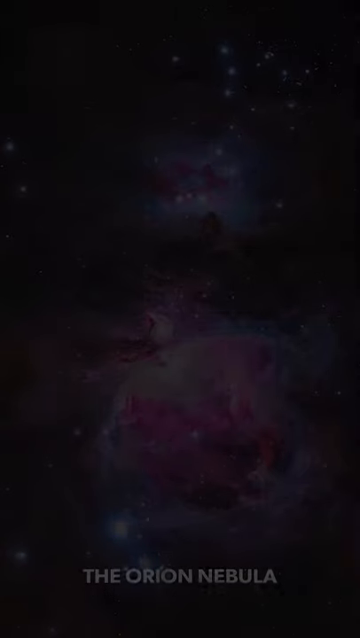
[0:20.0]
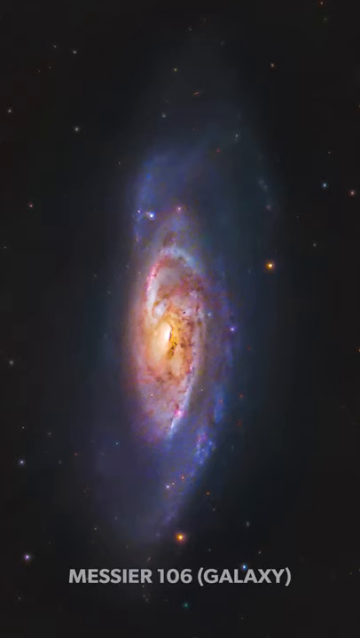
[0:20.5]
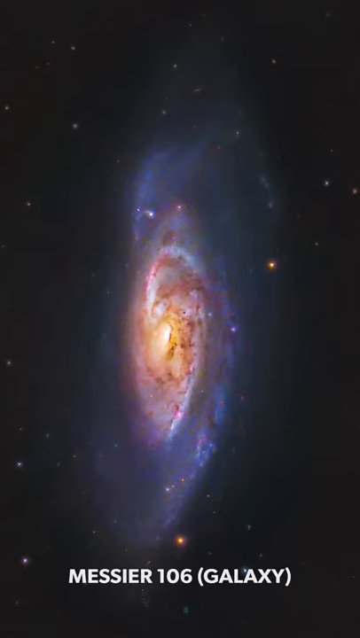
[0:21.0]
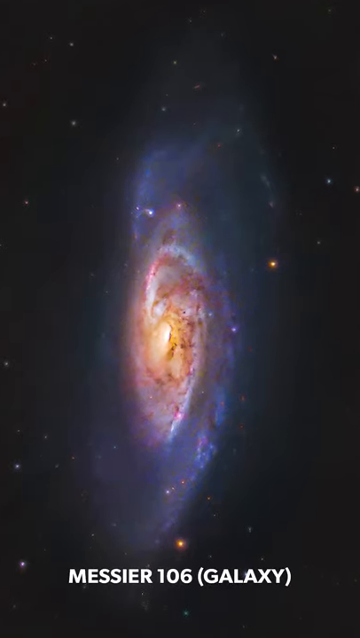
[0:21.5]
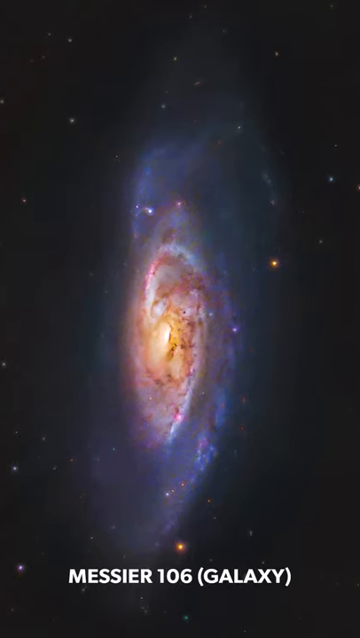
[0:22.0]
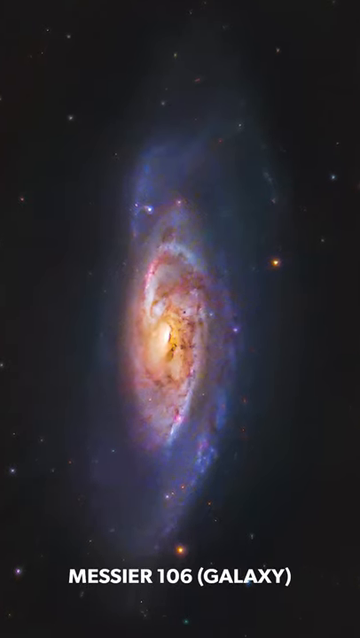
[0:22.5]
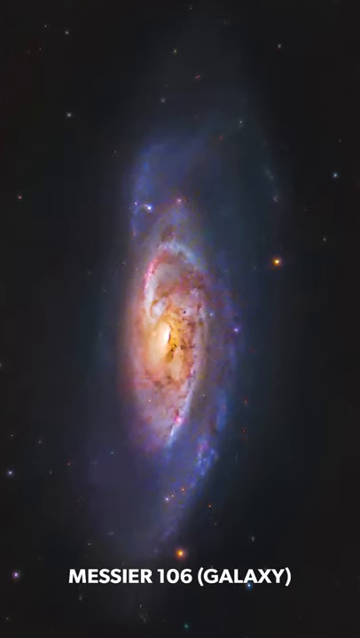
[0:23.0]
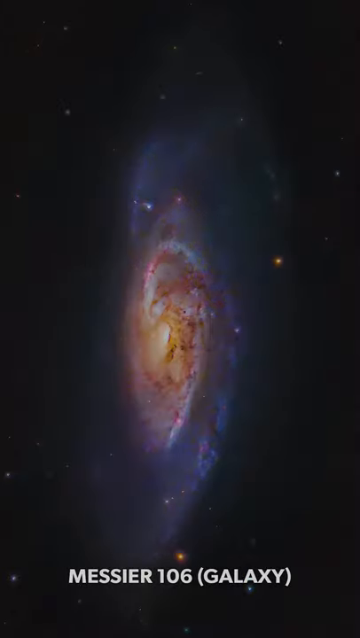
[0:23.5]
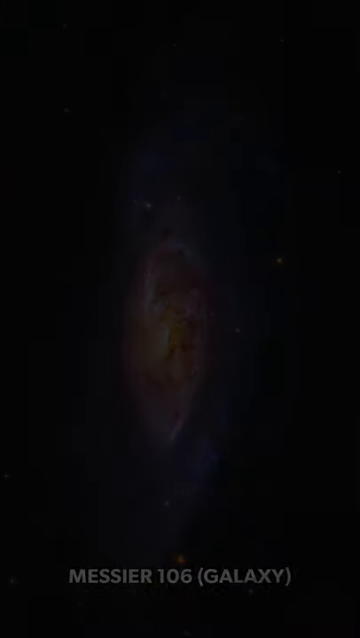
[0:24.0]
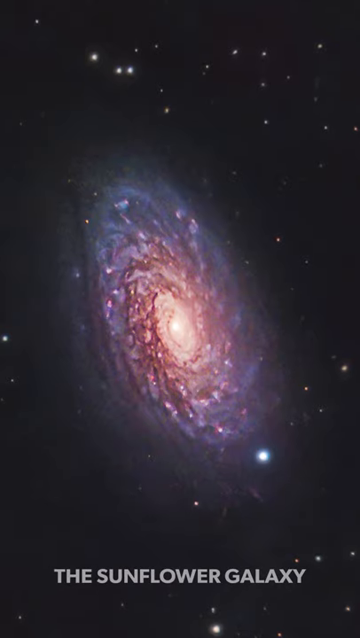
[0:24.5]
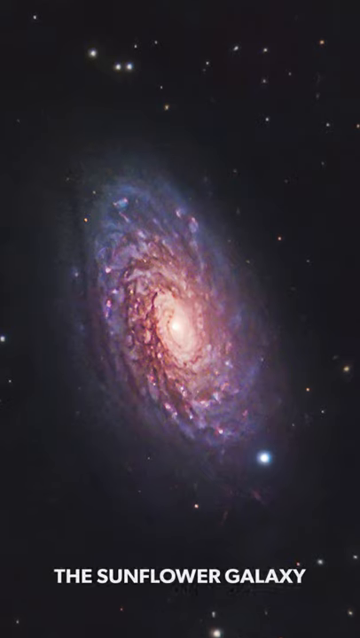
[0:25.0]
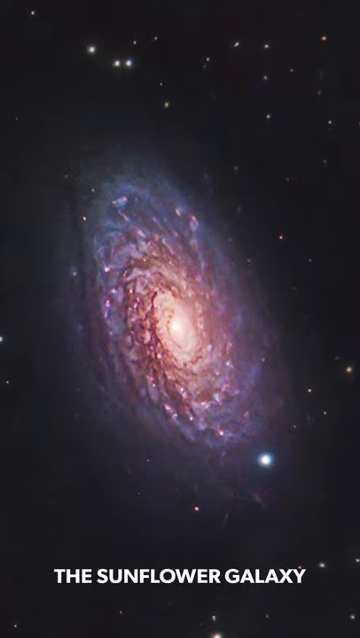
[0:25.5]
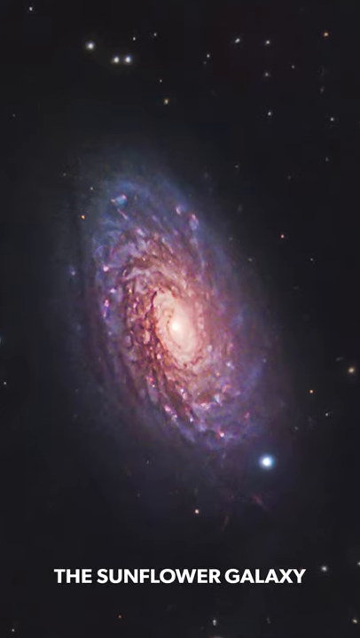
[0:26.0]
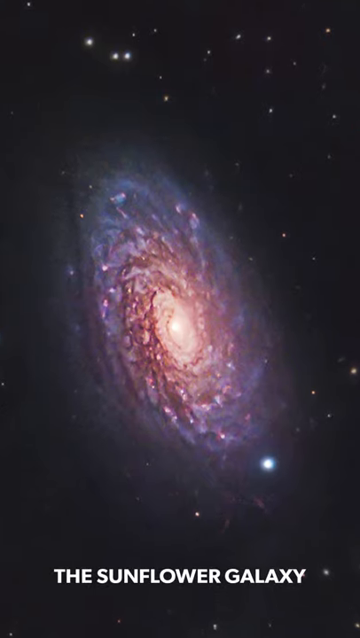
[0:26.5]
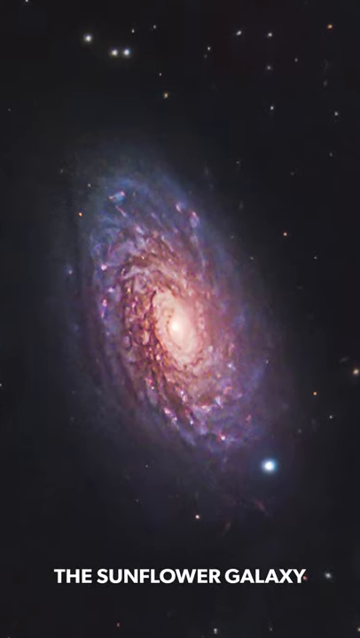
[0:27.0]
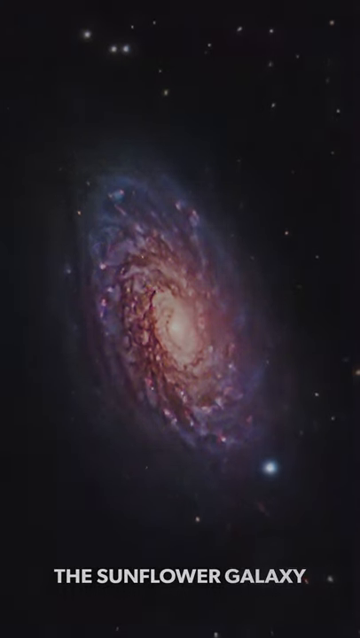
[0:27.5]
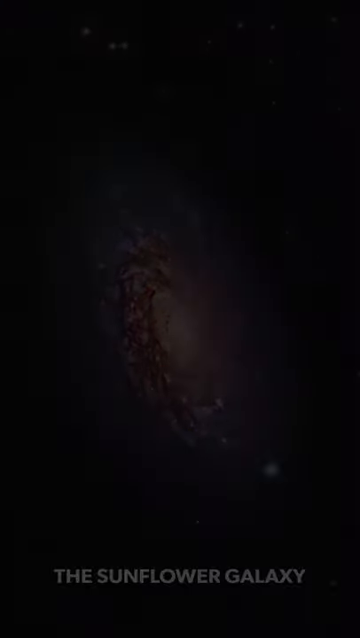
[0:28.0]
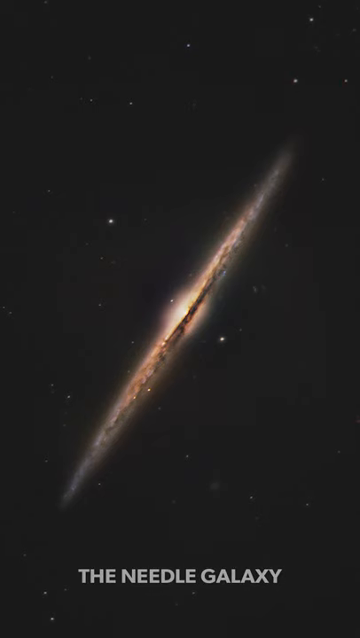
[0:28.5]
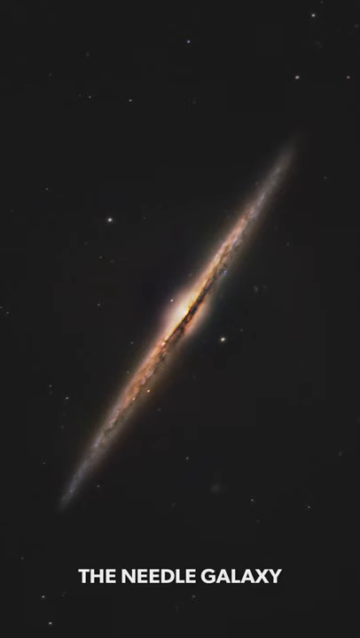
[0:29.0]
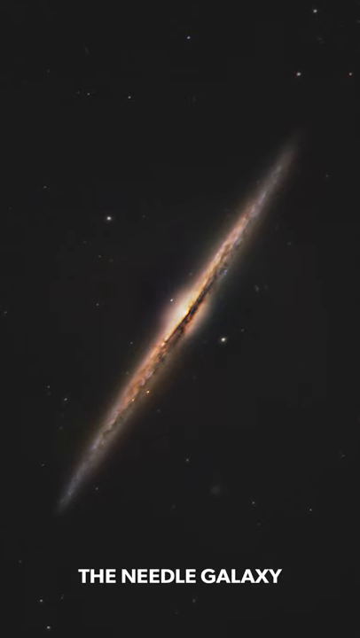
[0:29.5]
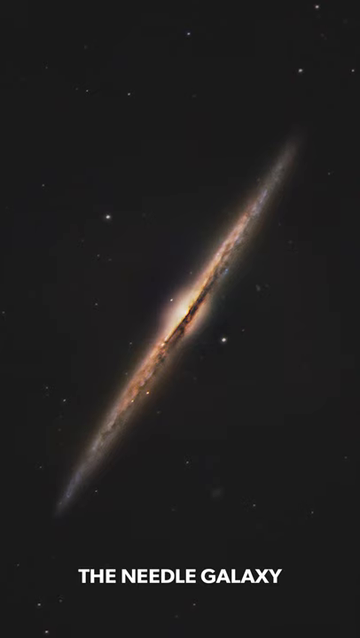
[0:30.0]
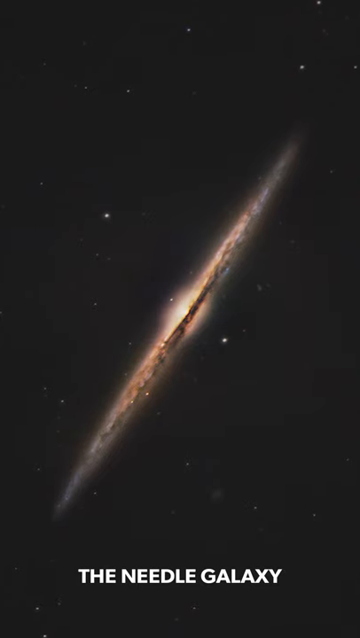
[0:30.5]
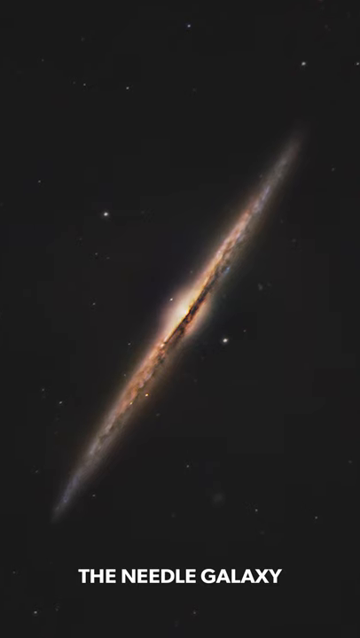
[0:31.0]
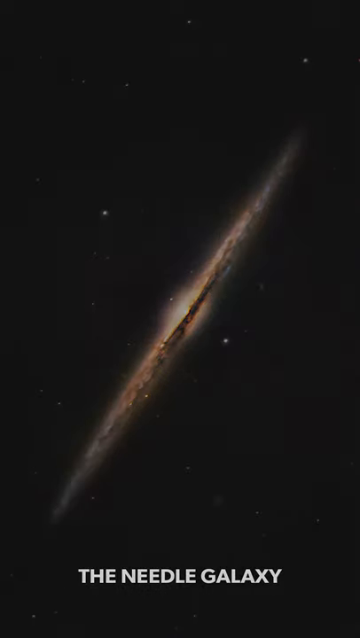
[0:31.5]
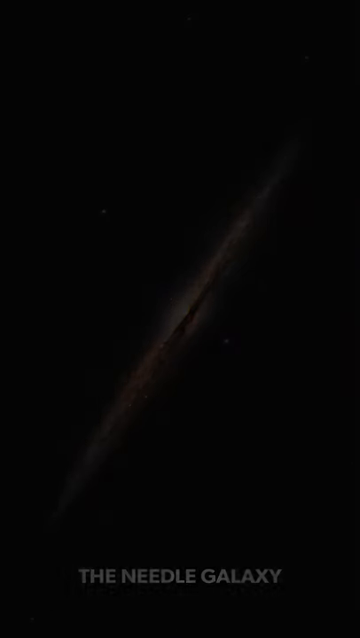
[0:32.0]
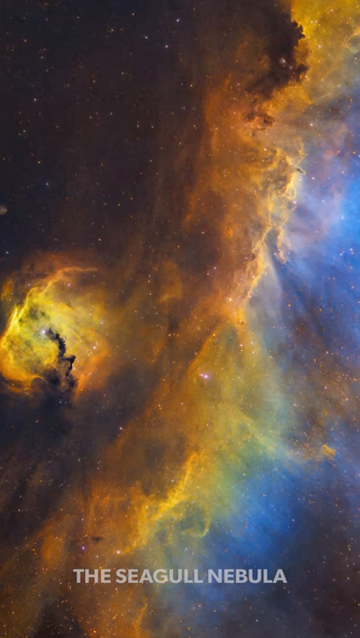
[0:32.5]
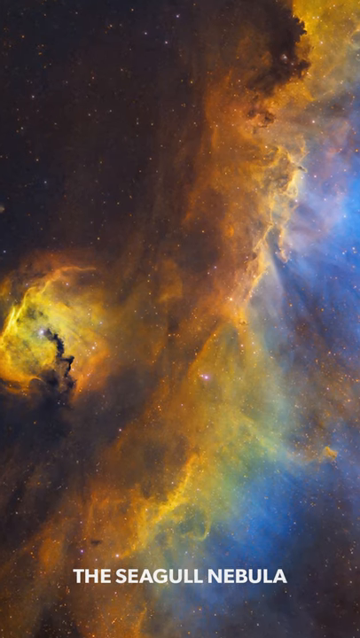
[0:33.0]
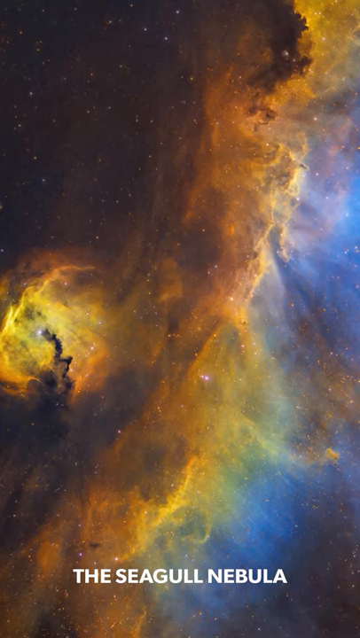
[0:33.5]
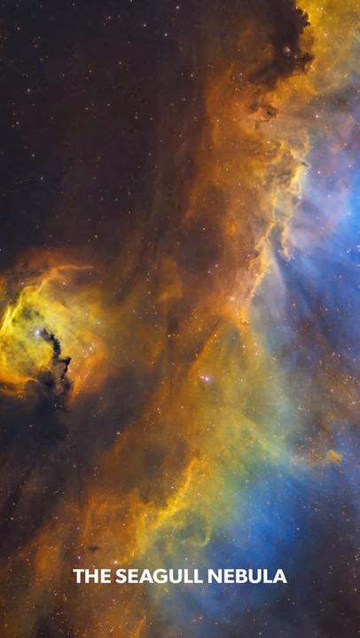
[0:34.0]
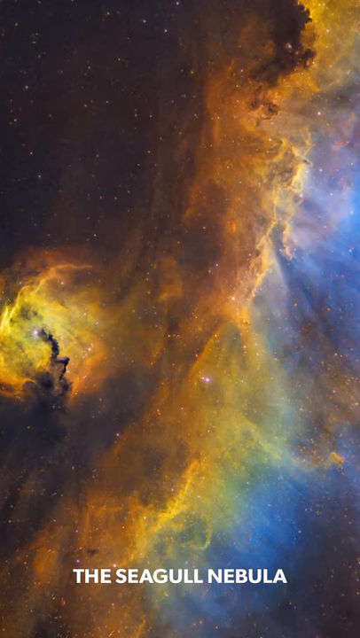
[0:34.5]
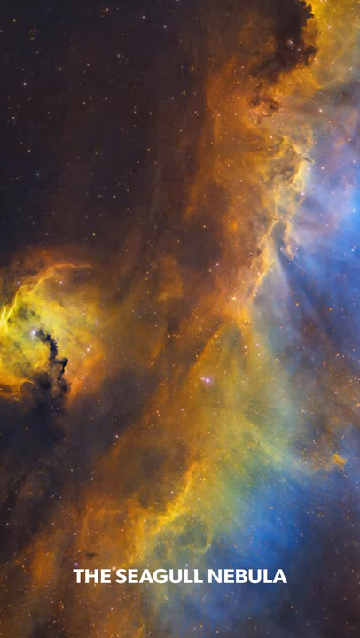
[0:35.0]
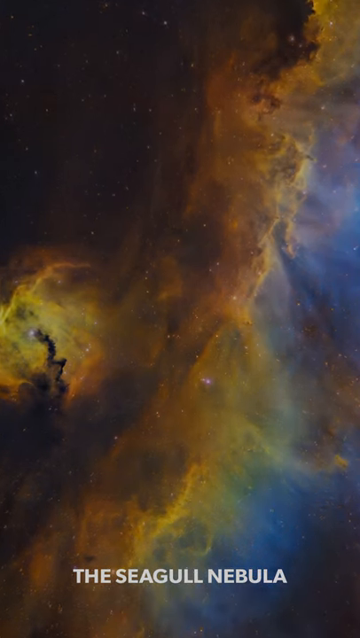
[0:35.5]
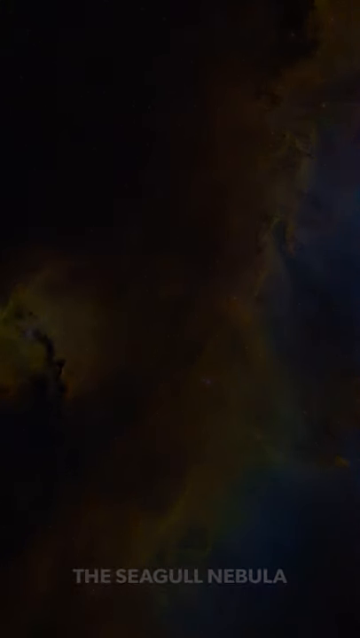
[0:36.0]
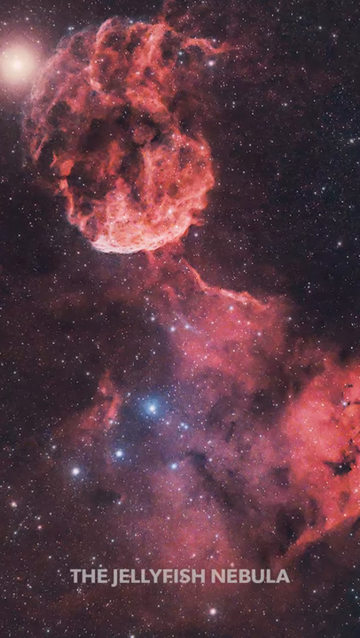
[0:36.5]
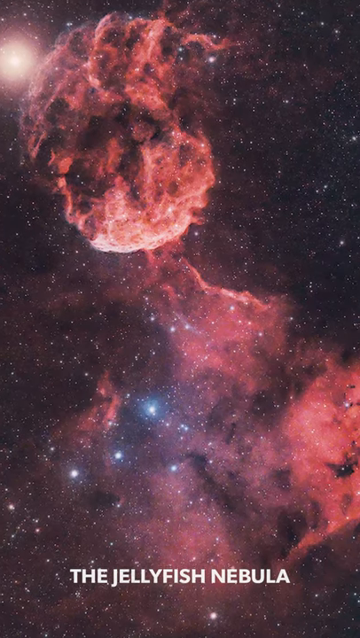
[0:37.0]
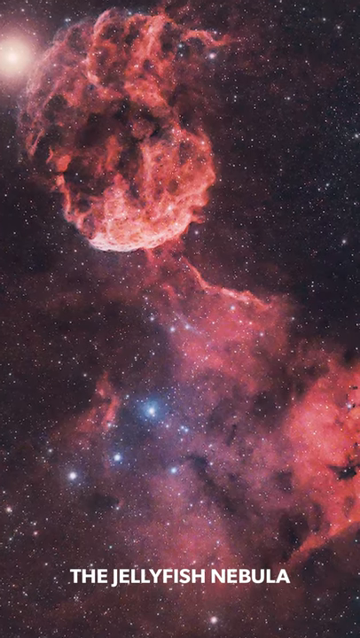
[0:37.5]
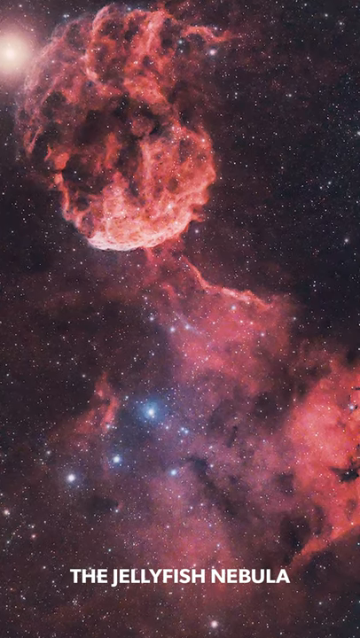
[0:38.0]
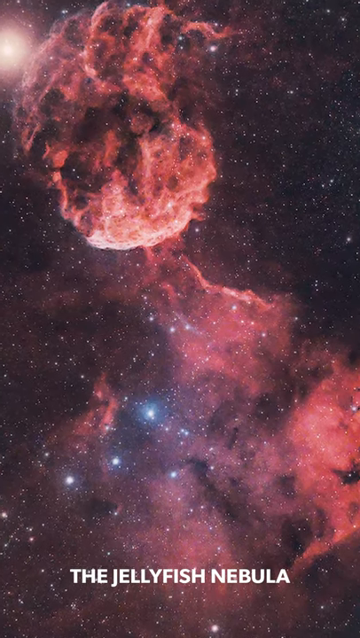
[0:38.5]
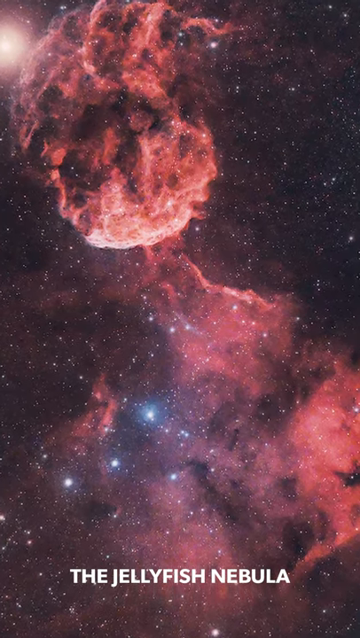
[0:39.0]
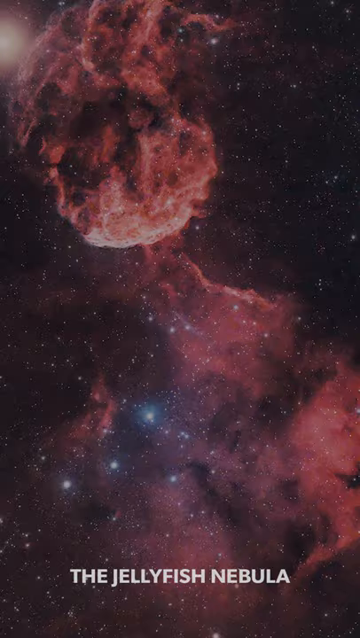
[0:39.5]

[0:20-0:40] A slideshow presents pictures the man took with his telescope. First comes the Messier 106 galaxy, then the Sunflower galaxy, which looks like a sunflower with many petals. Next is the Needle galaxy, a large round galaxy seen from the side, which makes it look like a needle. The Seagull nebula follows, shaped like a seagull and looking very nebulous, and then the Jellyfish nebula, which looks like a jellyfish and is red.